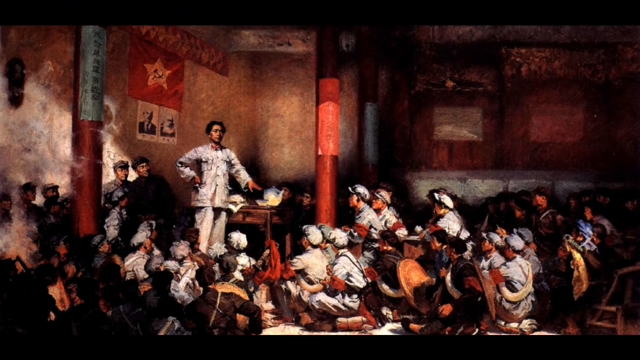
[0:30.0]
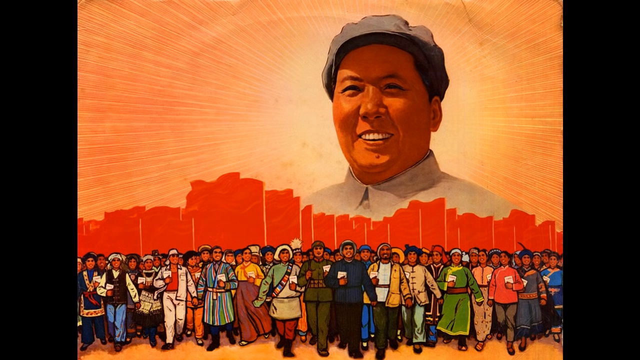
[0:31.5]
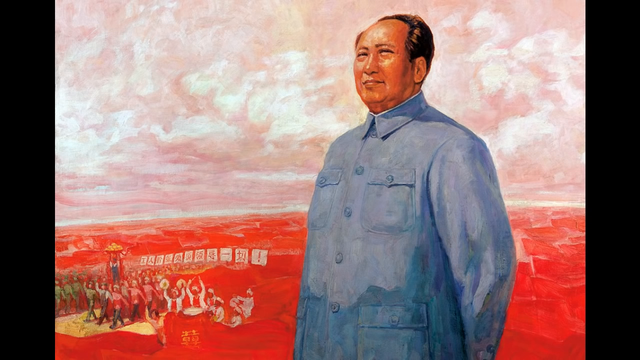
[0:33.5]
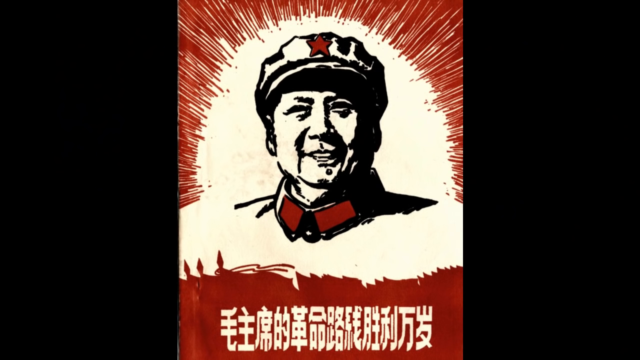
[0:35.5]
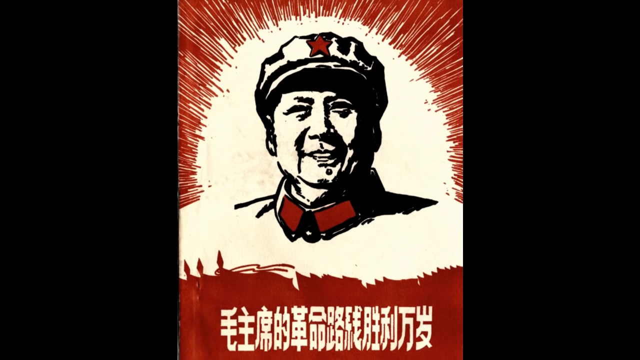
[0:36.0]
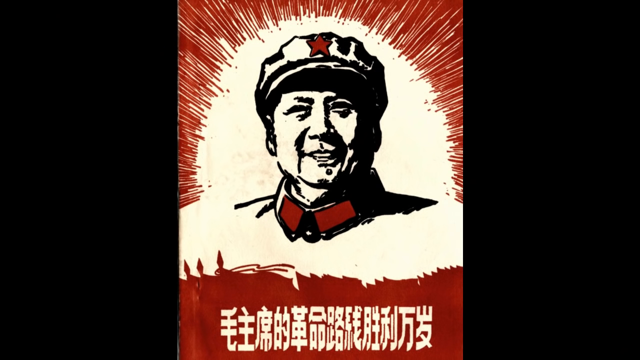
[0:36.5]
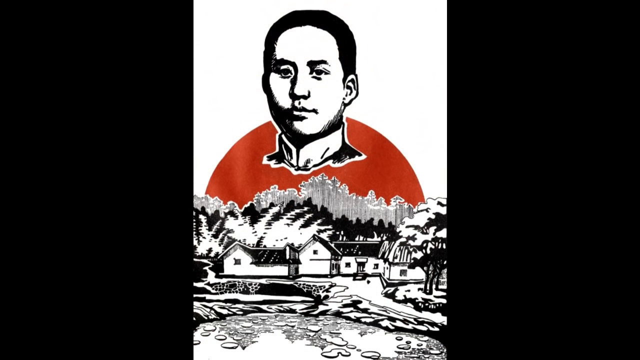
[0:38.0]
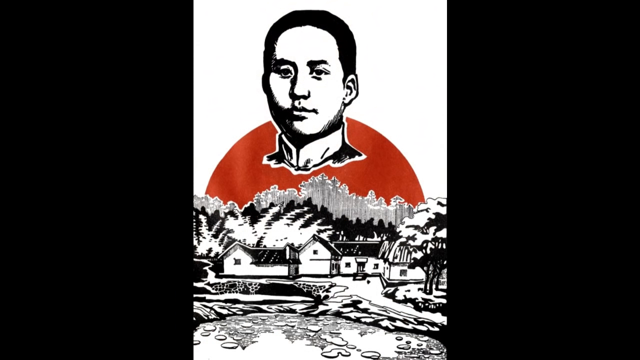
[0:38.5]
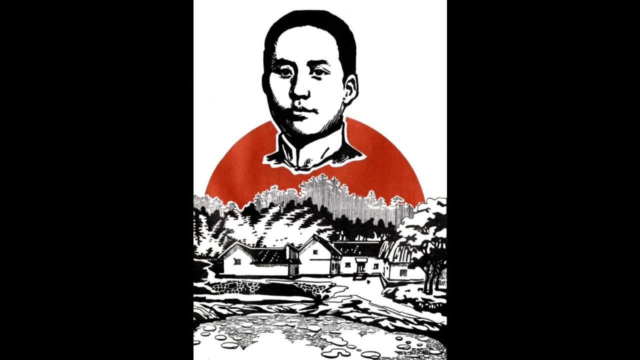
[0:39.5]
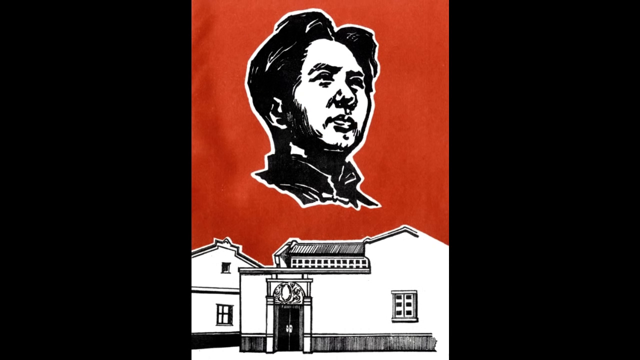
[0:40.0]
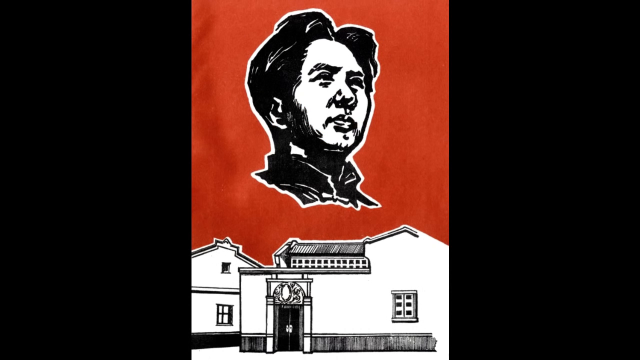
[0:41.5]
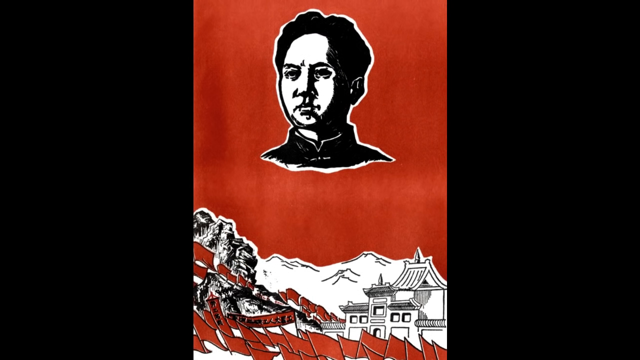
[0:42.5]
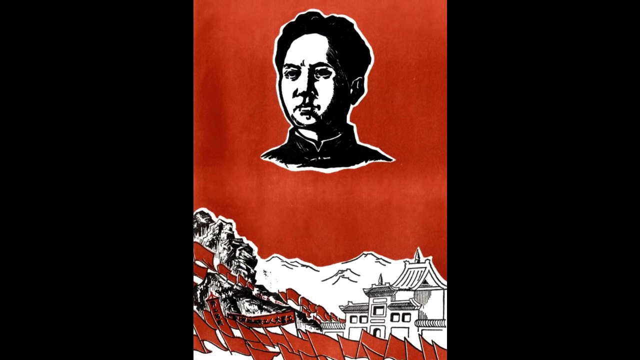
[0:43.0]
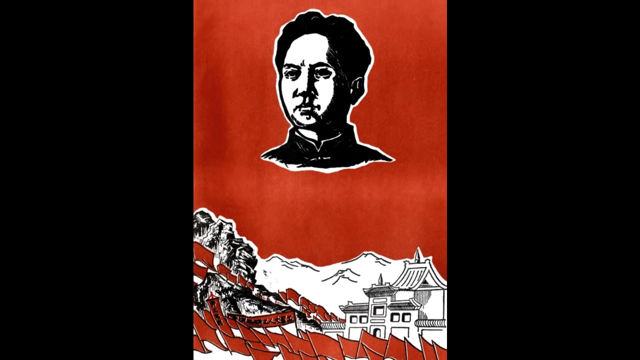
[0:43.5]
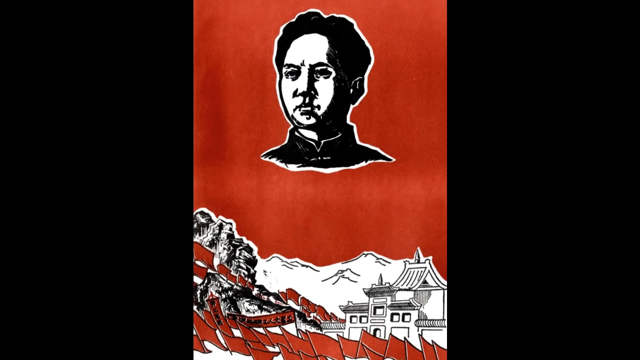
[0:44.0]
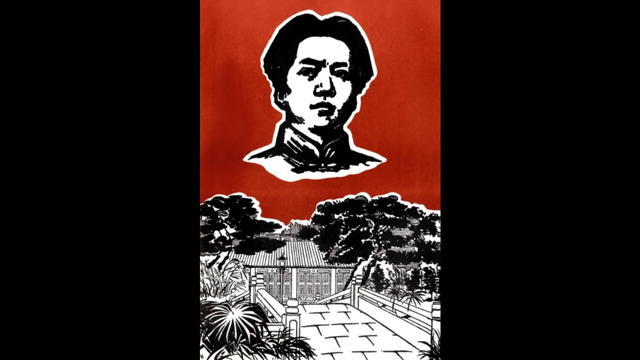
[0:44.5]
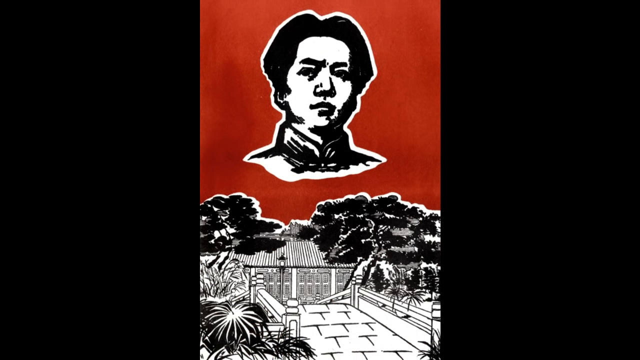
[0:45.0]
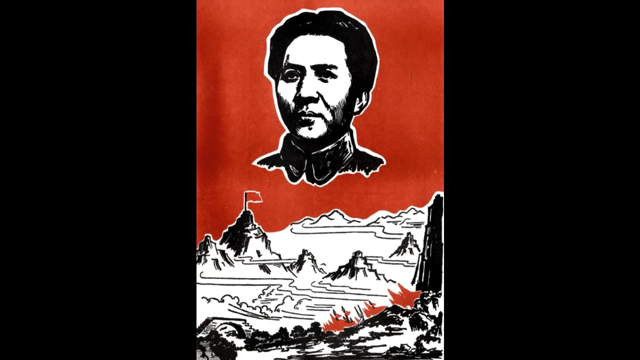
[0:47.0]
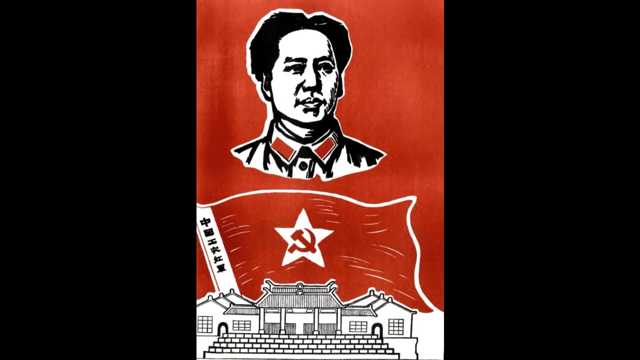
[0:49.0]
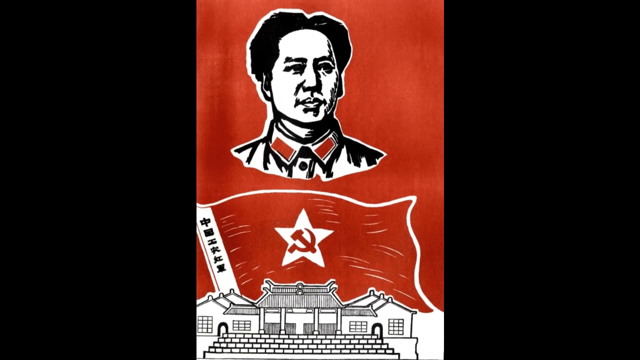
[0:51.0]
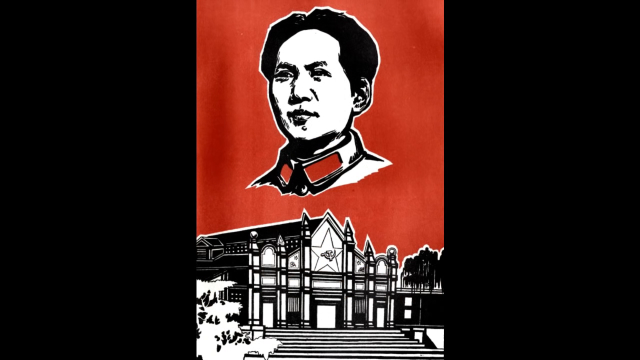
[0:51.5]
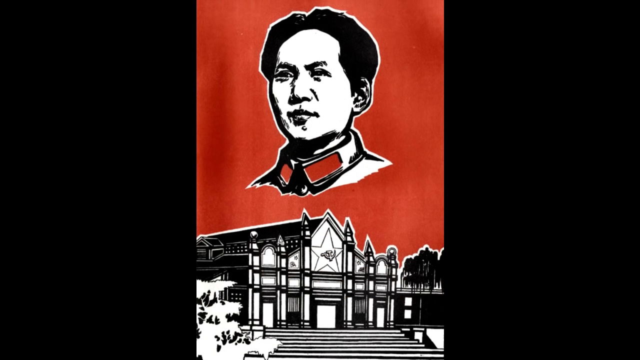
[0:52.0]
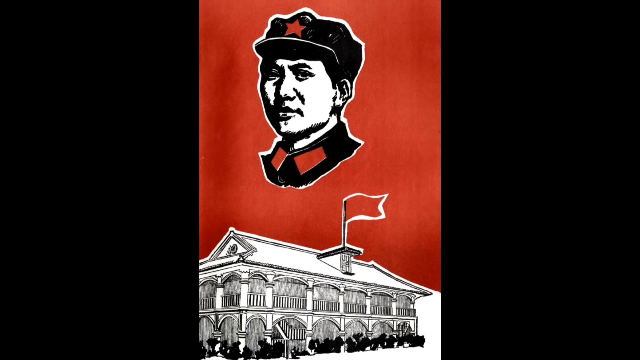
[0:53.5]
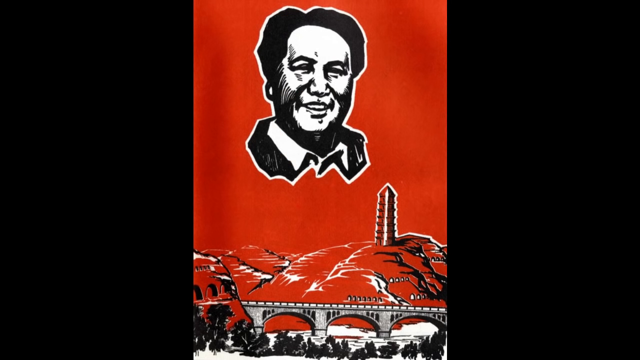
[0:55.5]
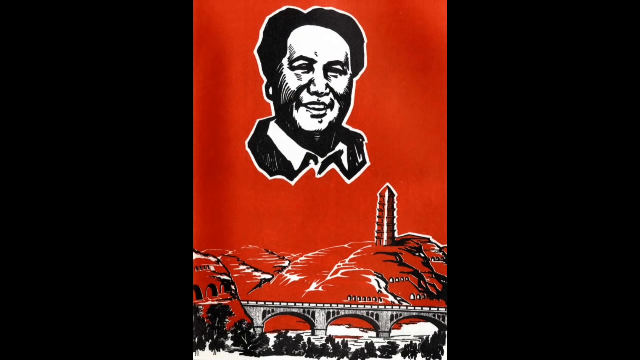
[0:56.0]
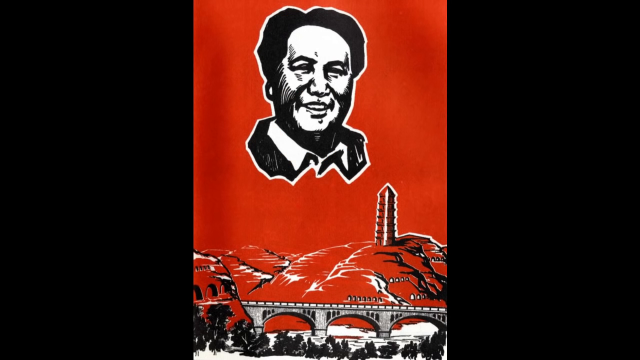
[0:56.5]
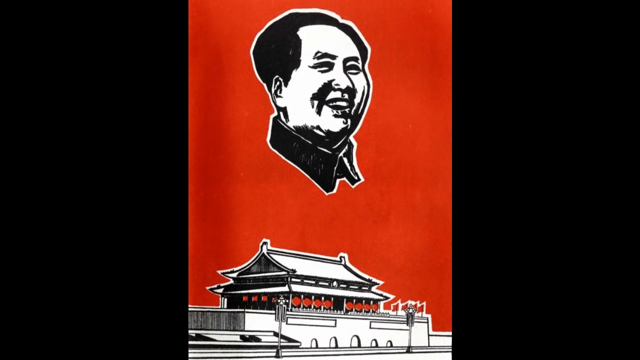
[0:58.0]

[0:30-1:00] The montage of propaganda-style artwork continues, featuring Chairman Mao or at least the common theme of the old Communist Party in China. The first image is an oil-painting-style picture of a central figure addressing a crowd of workers seated on the floor. They all wear white uniforms with white caps, and the speaker likewise wears a white uniform. In the background are some posters with communist designs on them. The next image features a younger Chairman Mao wearing a grey newsboy cap. He is smiling and is at the center of sun imagery, with bright sunbeams radiating from him. Beneath him is a sea of red flags, and beneath that a sea of very diverse-looking Chinese citizens who are all smiling and very happy. That image cuts to another similar illustration with Chairman Mao featured larger than life with a content look on his face, a red-themed landscape with a sea of red flags behind him, and a group of happy citizens in the lower left-hand corner.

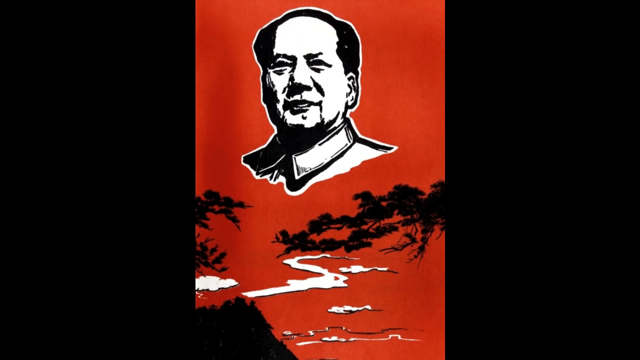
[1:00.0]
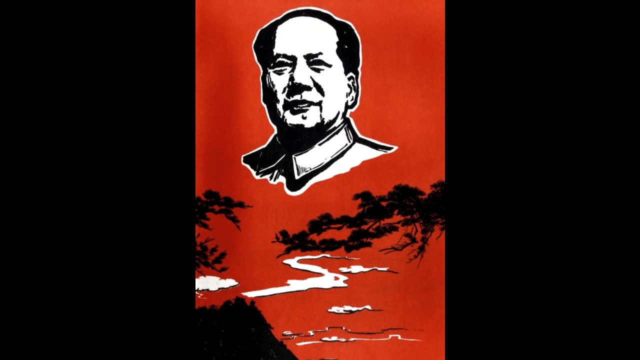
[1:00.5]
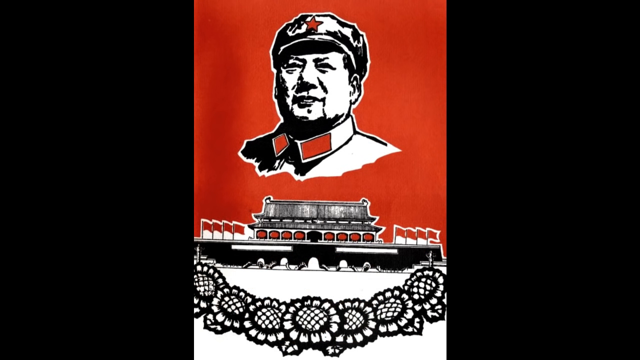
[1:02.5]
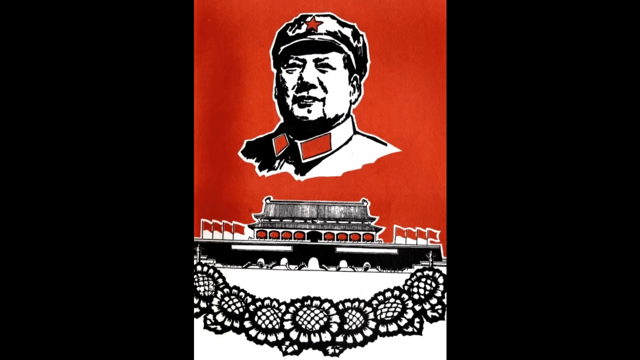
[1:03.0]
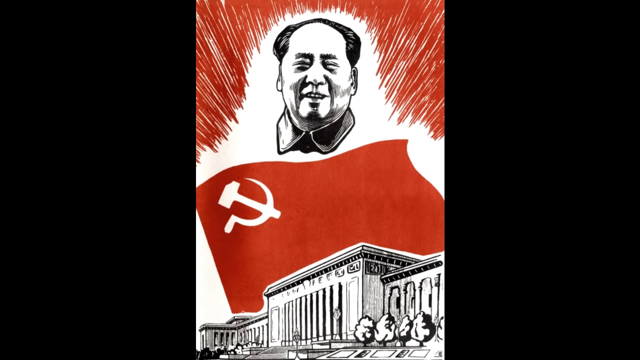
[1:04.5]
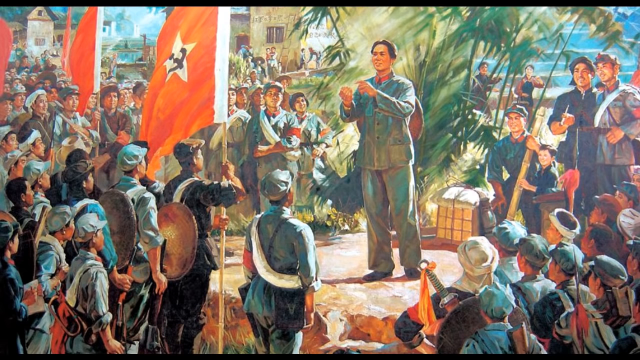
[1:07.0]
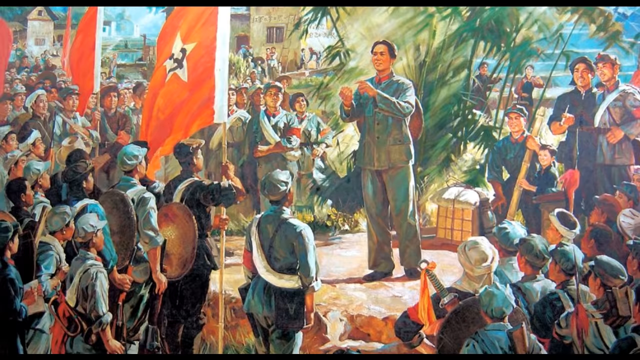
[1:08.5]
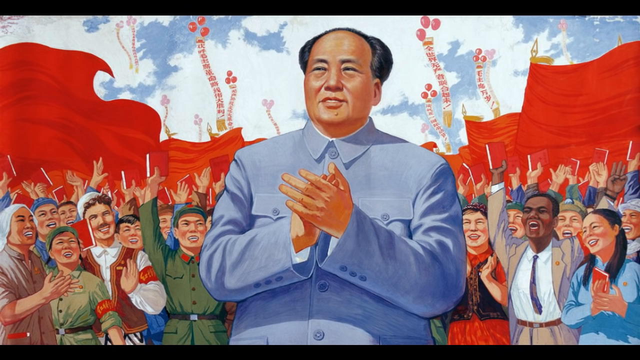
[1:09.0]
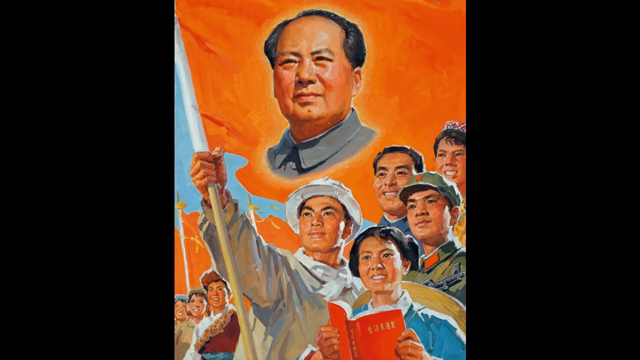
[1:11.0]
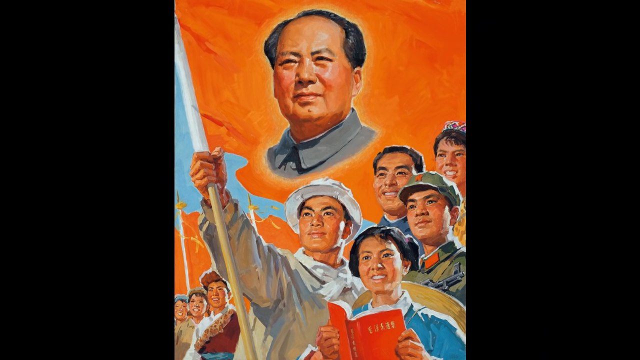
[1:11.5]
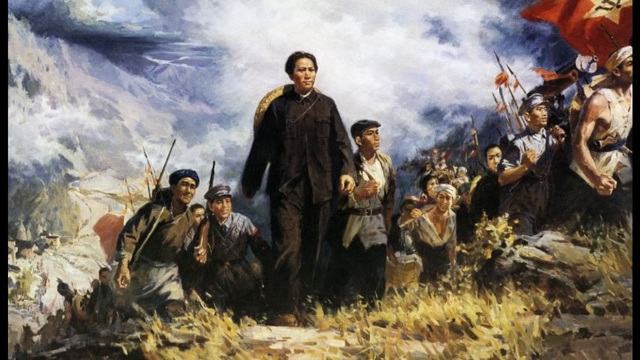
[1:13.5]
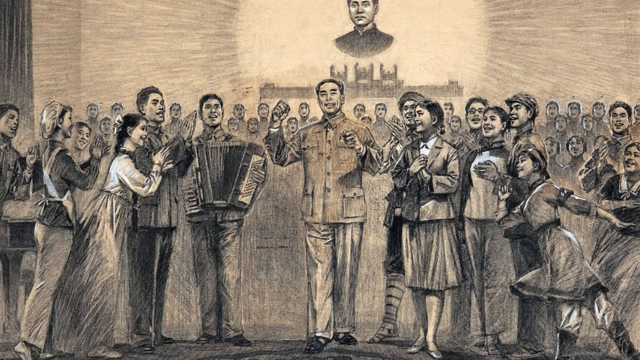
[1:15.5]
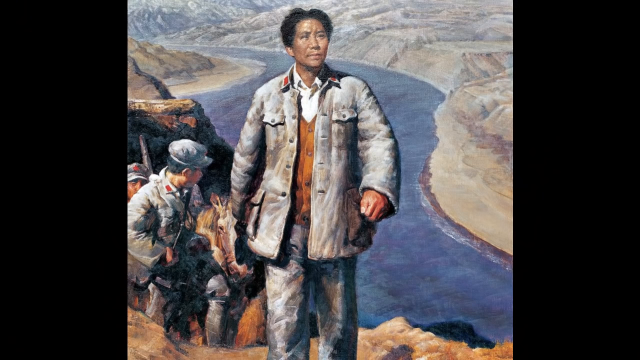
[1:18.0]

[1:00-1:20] More communist propaganda imagery, illustrations and posters follow. The first has a red background with a black-and-white-style illustration of Chairman Mao in the upper center. Beneath him are minimalist landscape features such as black tree branches and some white shapes that are either clouds or perhaps a winding stream. The next is similar, with Chairman Mao in the same top-center placement, but he is in a military uniform with red design points on his collar and wears a newsboy-style cap with a red star in the center. Underneath his image is a traditional-style Chinese building with red flags, and beneath that a black-and-white line drawing of what looks like sunflowers. That image cuts to another similar image of Chairman Mao, smiling and not wearing a hat, again featured at the top center. Dramatic red lines are drawn out from him in a silhouette. Underneath is a large red flag with a hammer and sickle in the upper left-hand corner, above a large rectangular building.